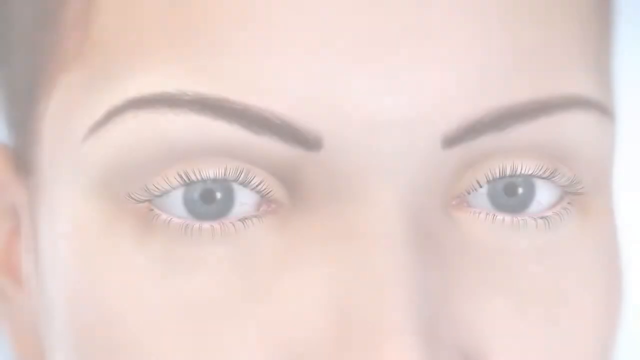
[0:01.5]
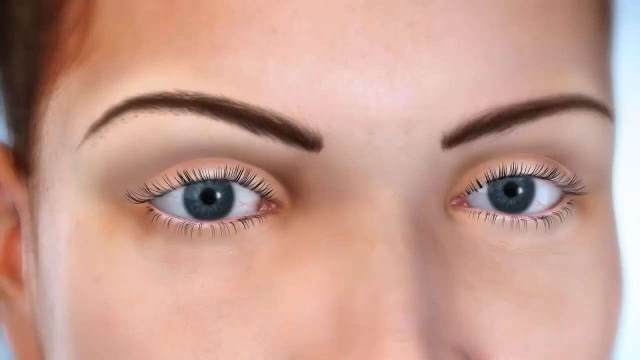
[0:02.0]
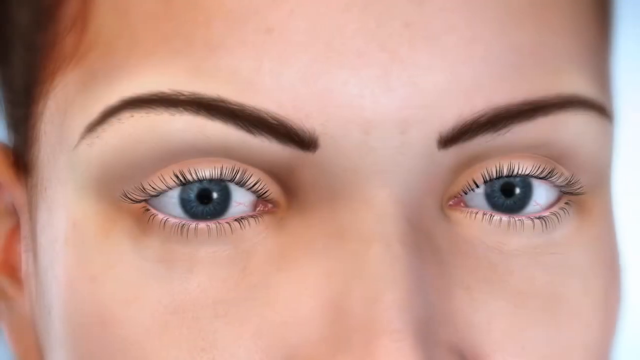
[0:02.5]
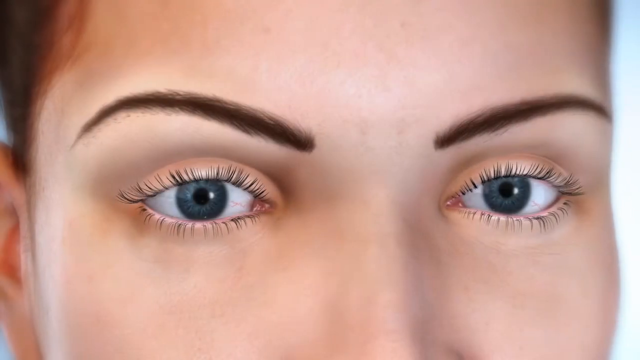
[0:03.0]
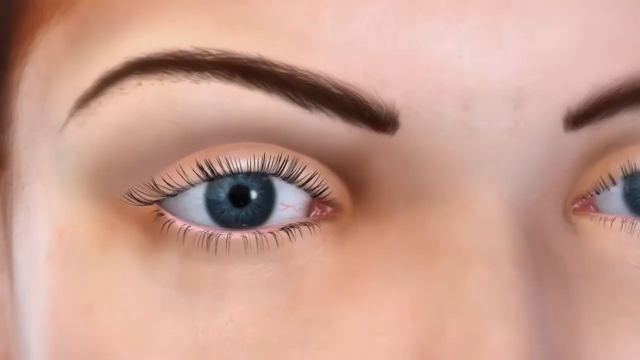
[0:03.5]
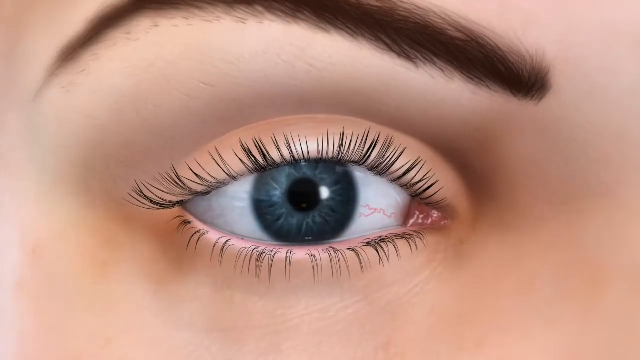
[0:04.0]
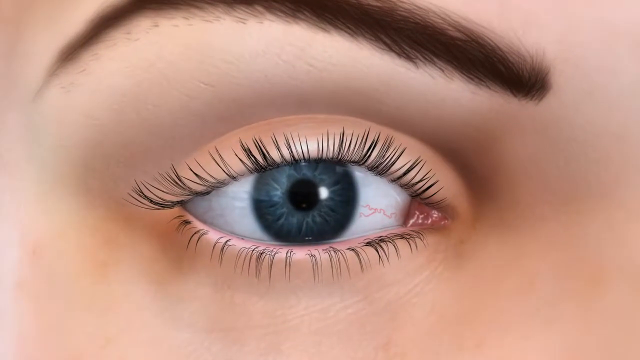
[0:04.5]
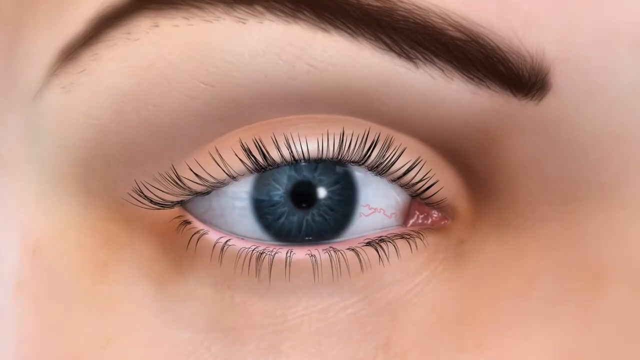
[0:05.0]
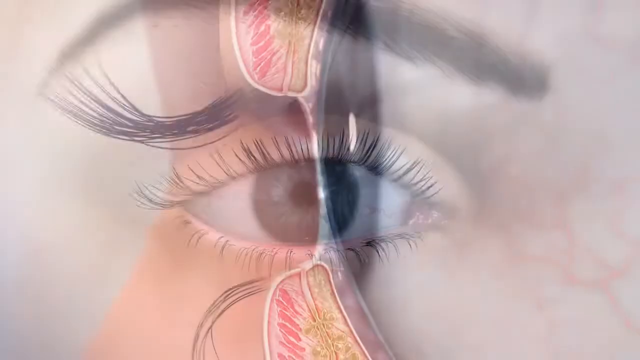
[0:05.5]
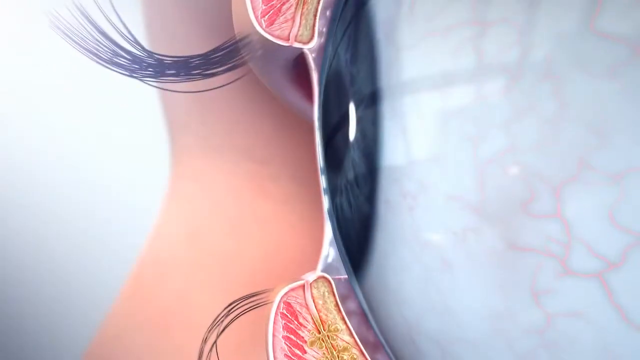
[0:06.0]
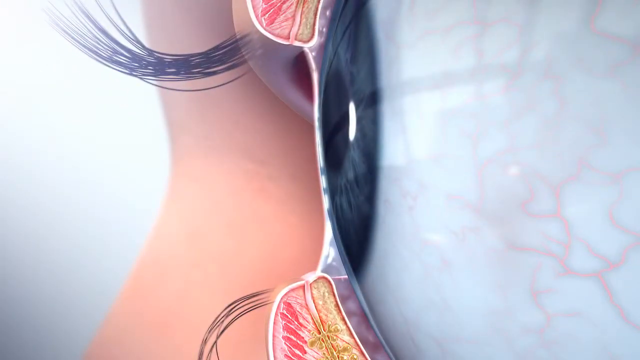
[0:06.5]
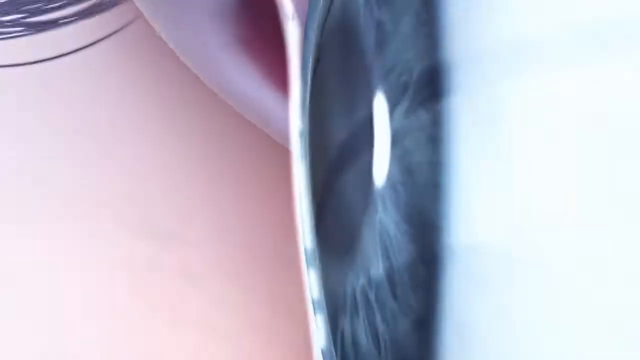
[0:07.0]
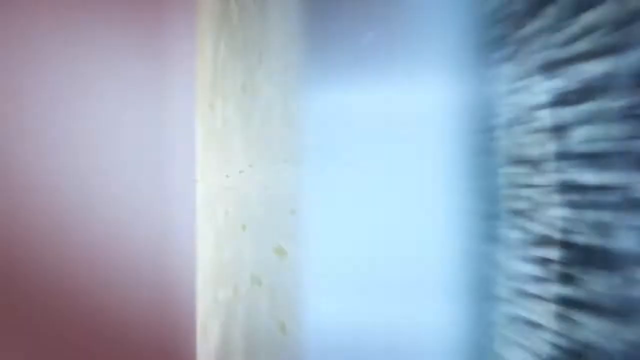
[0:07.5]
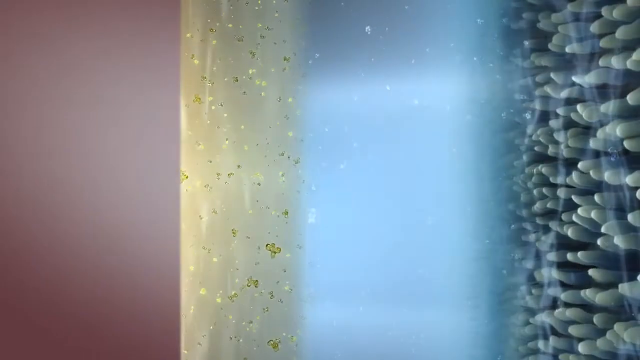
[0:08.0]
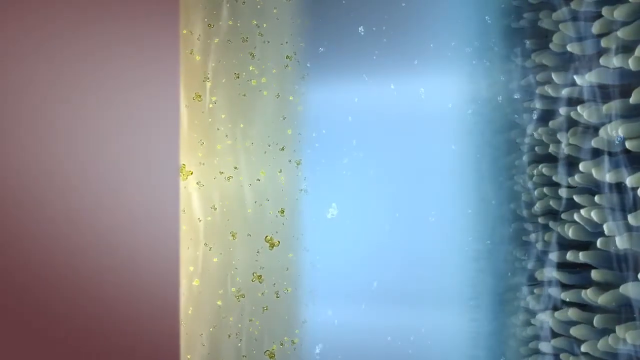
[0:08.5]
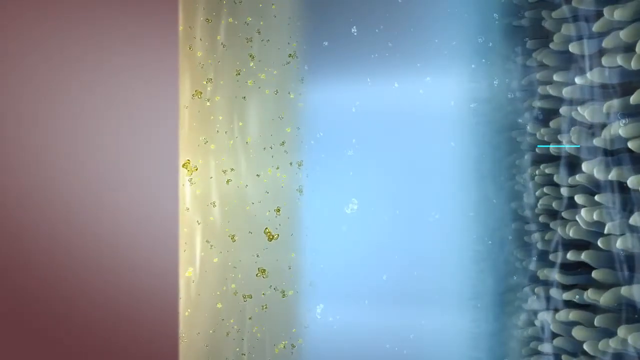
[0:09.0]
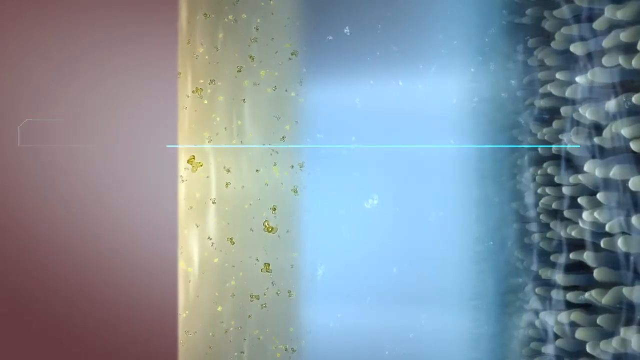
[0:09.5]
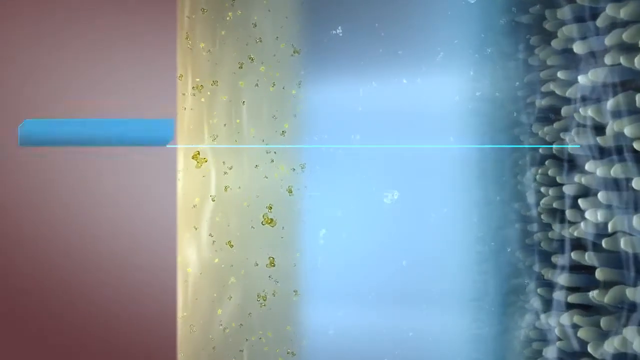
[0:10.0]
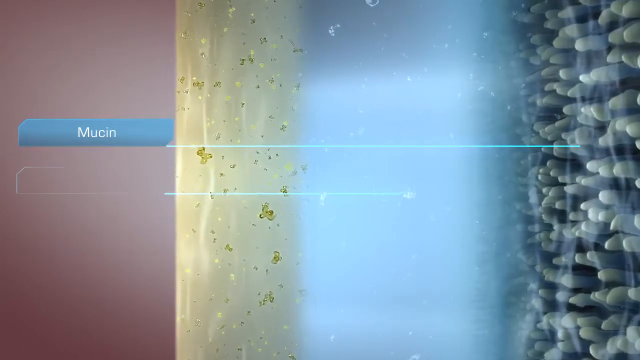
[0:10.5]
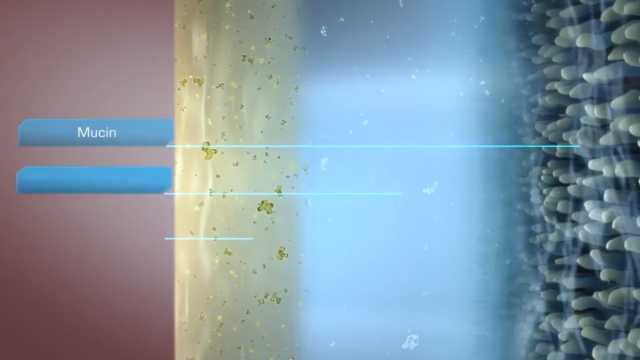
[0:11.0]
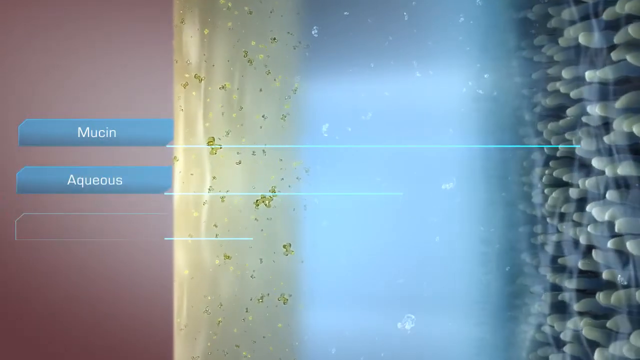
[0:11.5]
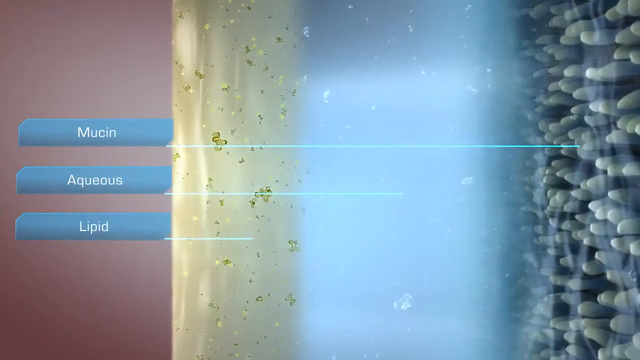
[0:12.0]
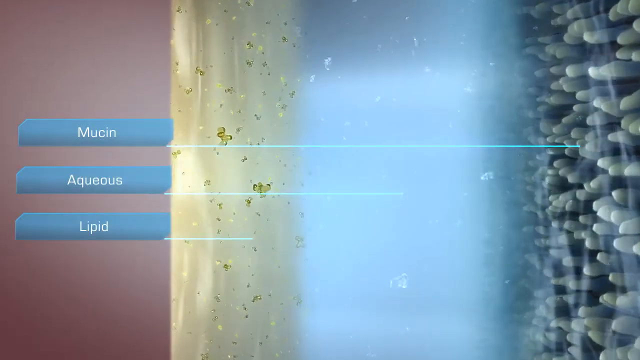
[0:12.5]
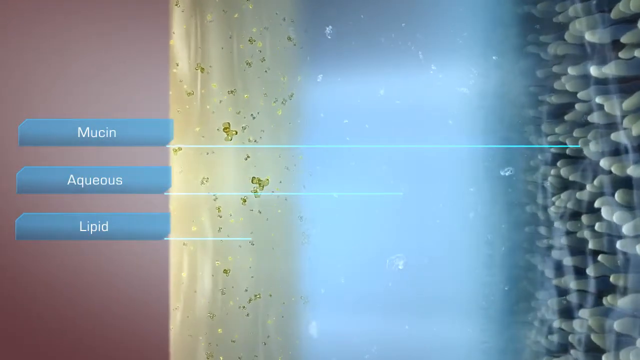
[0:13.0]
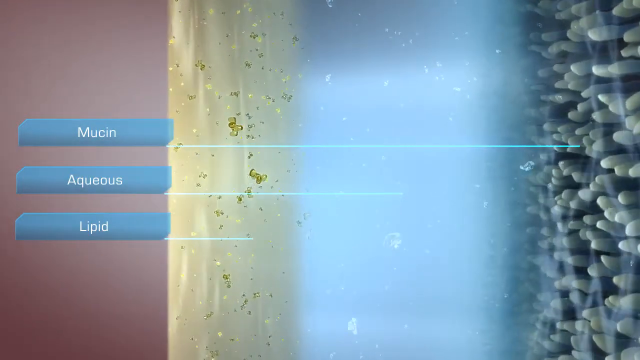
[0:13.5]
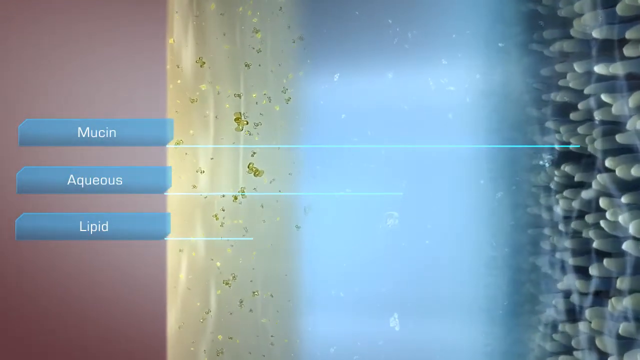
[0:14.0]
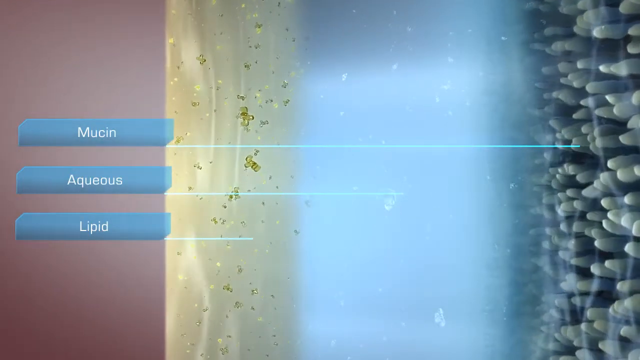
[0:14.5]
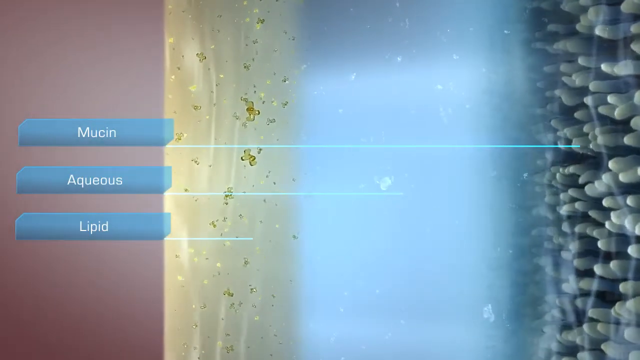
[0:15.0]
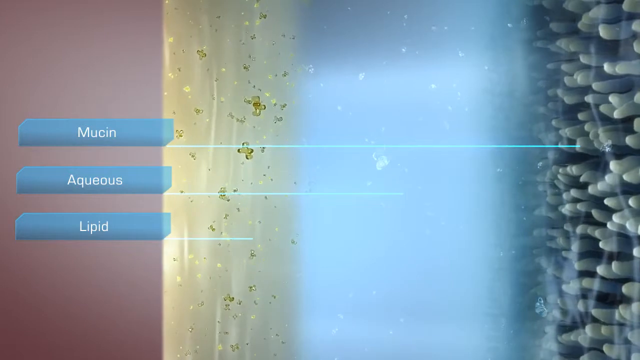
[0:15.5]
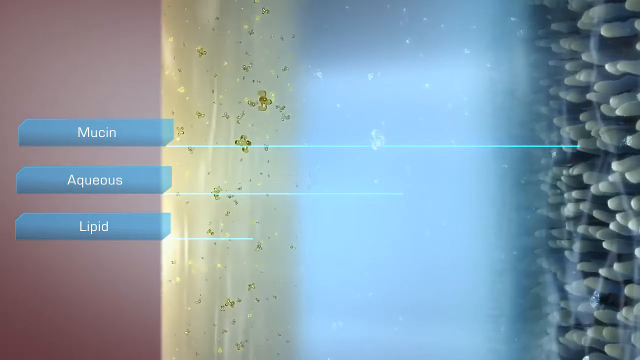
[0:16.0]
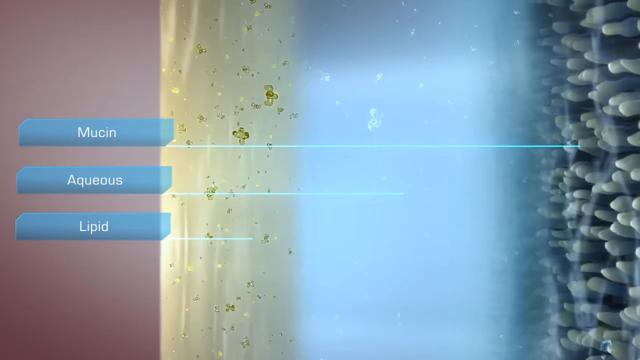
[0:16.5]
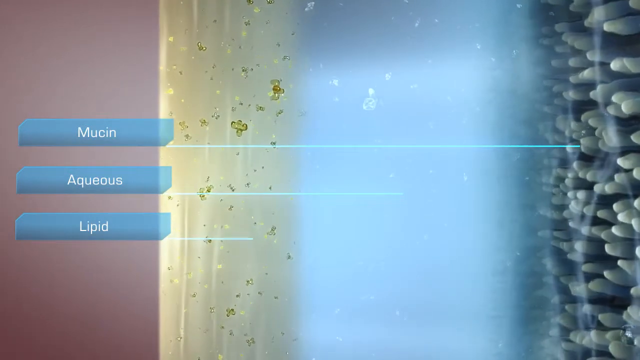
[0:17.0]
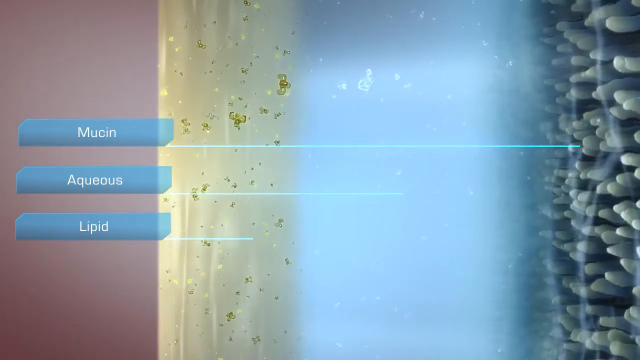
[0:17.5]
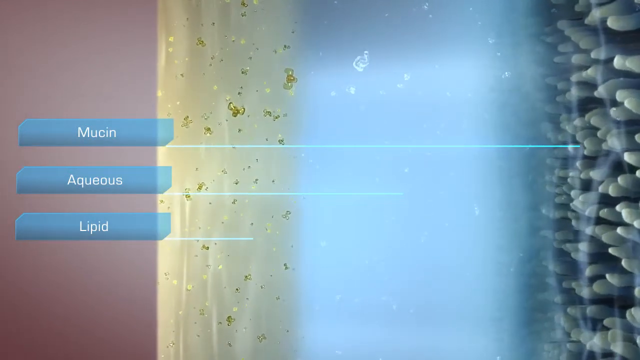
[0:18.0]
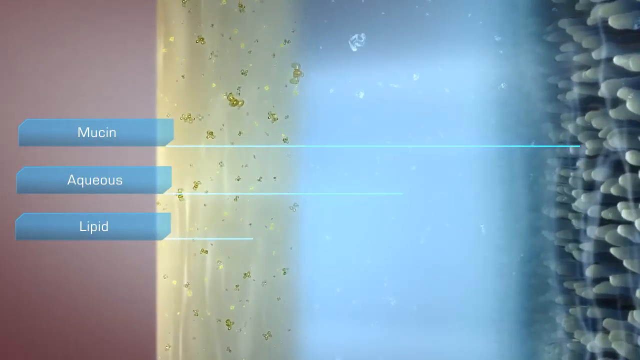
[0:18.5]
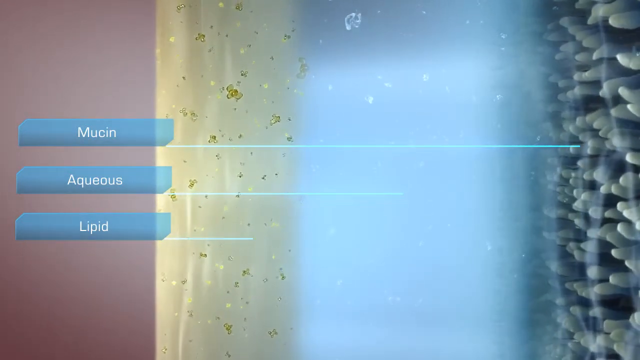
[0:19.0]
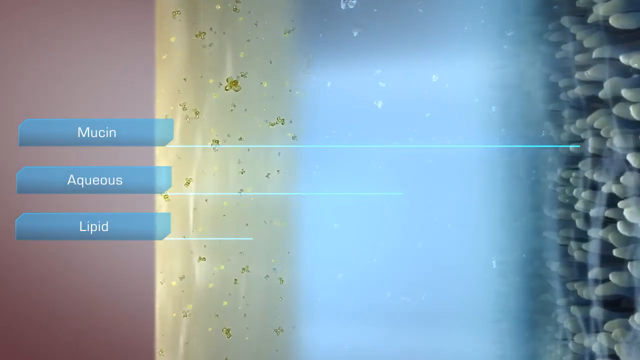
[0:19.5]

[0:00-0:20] The video opens on a white background, then cuts to a very close-up image of a woman's eyes, showing just across the bridge of her nose. She has blue eyes with long dark lashes and thinner, arched brown or reddish-brown eyebrows. A bit of her hair is barely visible, pulled back, along with a small part of her ear. Her skin is pale and she is Caucasian. The image does not appear to be a photograph; it looks more like digital art. The camera zooms closer to focus on just her right eye. The eye blinks, and the image changes to a very close-up side view of an eyeball, apparently an attempt to show the layers underneath the eyelids, which look like possibly muscles and fat. It zooms in closer to the lens of the eye, showing different layers: an outer part that looks kind of yellowish with gold flecks moving all through it, below it something that almost looks like blue light, and below that a mass of knobby shapes resembling the little bumps on a silicone shower scrub brush. The layers are not labeled yet. Three blue boxes then appear off to the left side of the screen, each with a sort of laser-blue line drawn to a different layer: the top one says "mucin", the middle one says "aqueous", and the bottom one, pointing to the outermost layer, says "lipid". Little particles sort of float around within the lipid and aqueous layers.